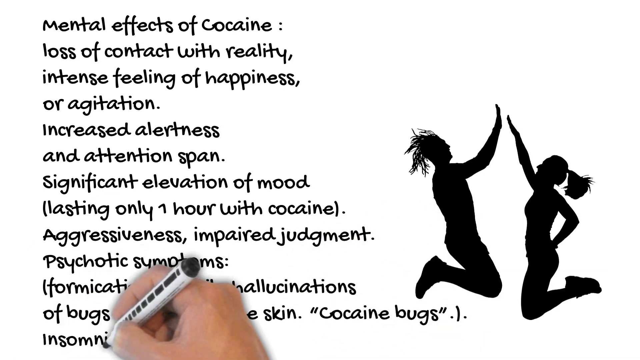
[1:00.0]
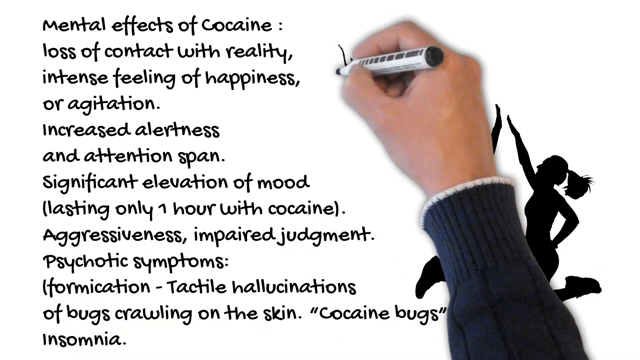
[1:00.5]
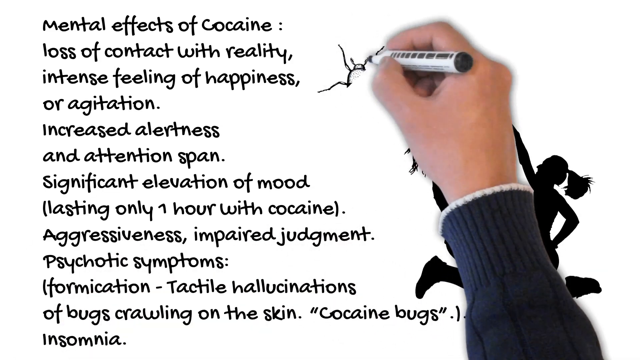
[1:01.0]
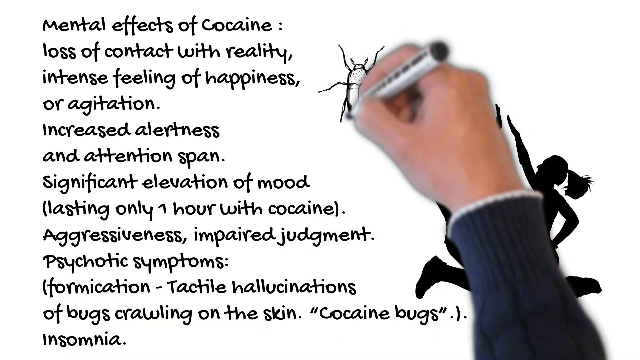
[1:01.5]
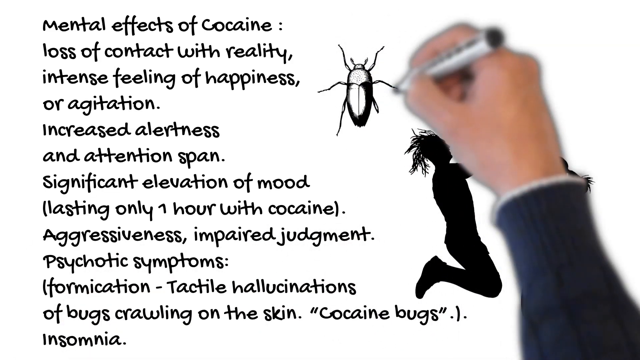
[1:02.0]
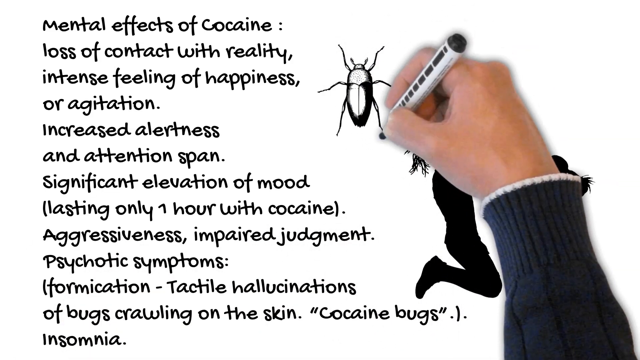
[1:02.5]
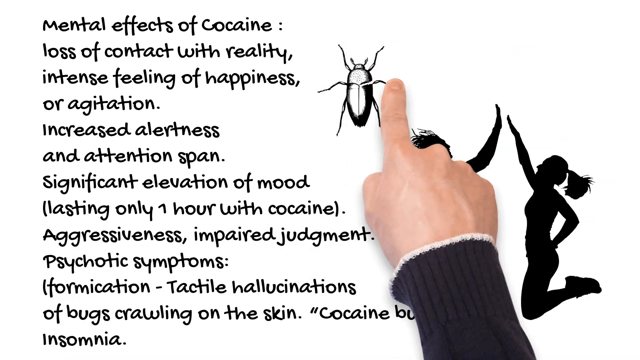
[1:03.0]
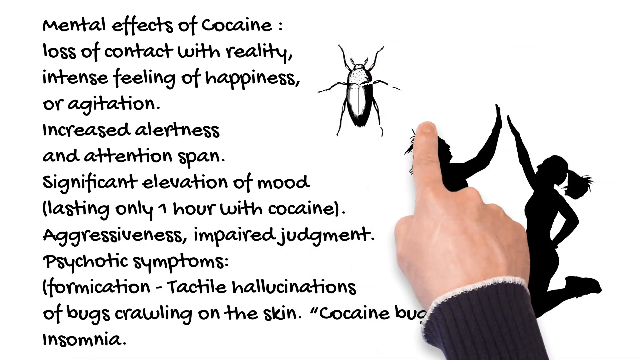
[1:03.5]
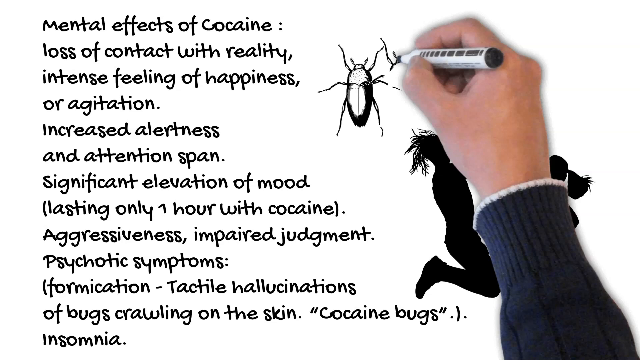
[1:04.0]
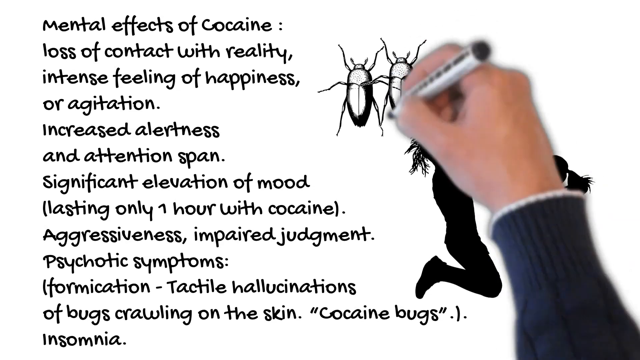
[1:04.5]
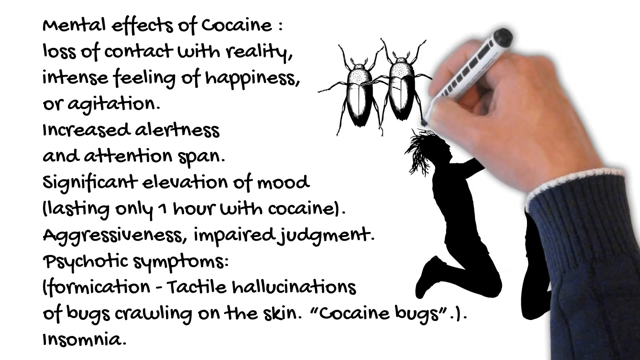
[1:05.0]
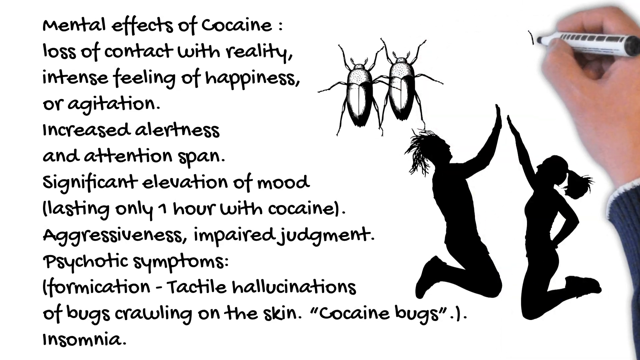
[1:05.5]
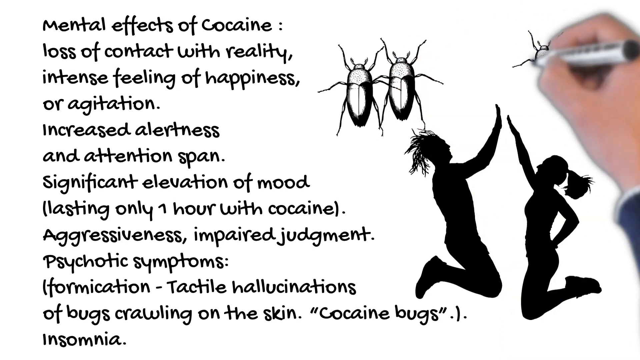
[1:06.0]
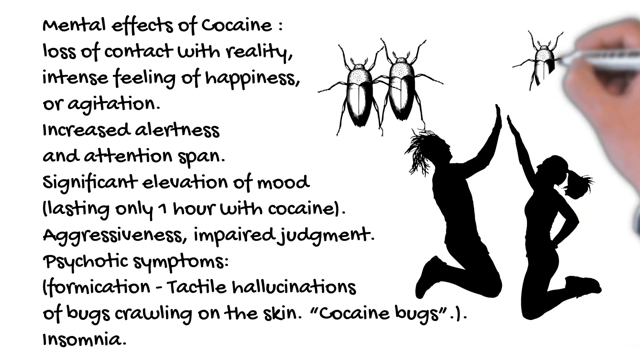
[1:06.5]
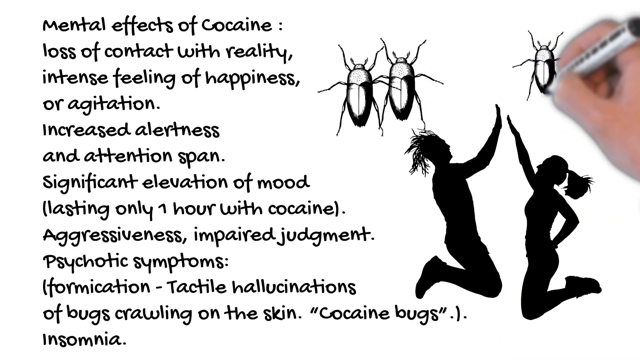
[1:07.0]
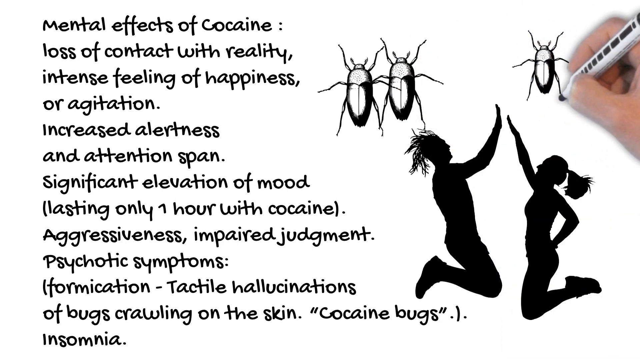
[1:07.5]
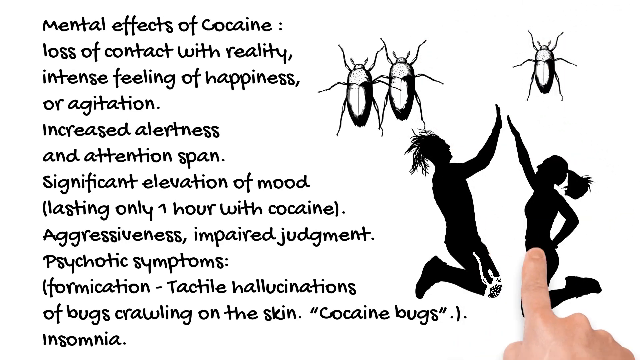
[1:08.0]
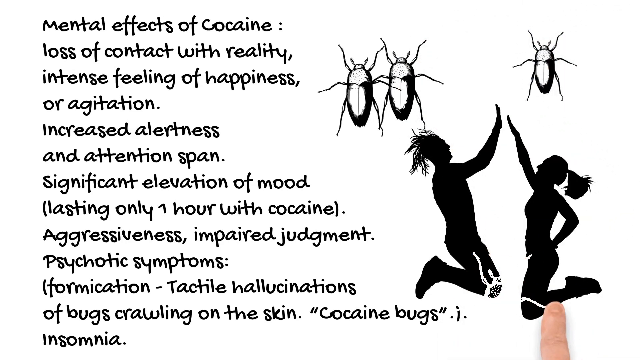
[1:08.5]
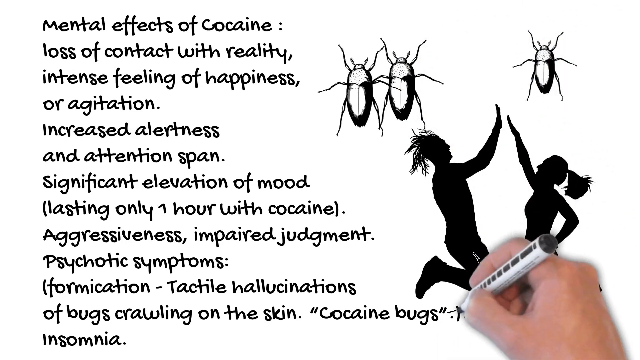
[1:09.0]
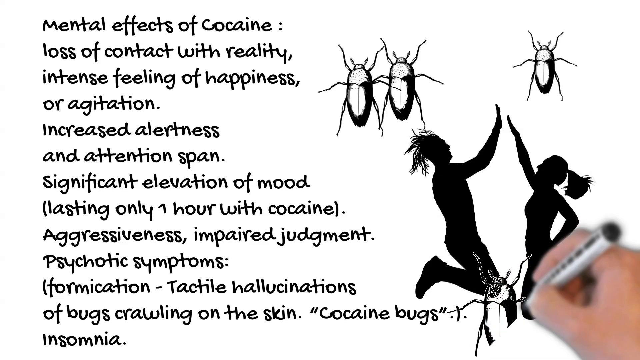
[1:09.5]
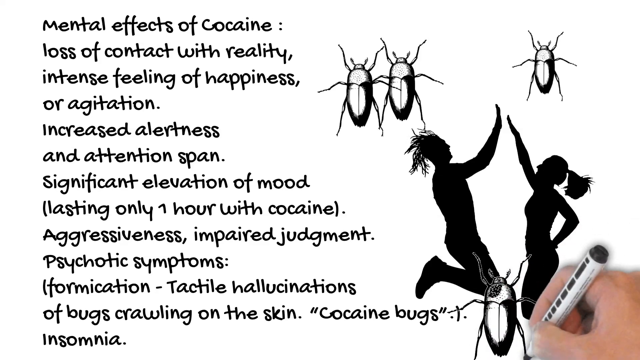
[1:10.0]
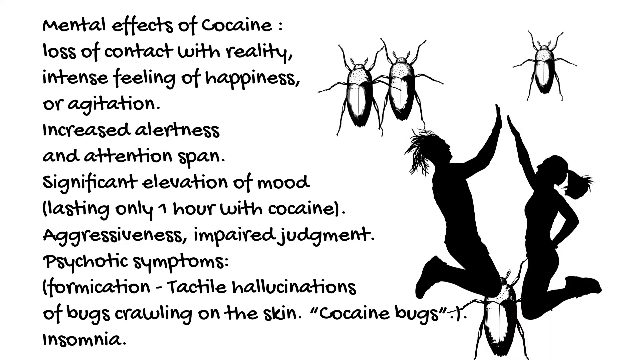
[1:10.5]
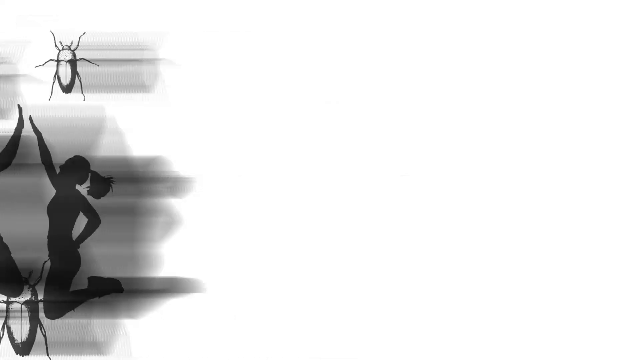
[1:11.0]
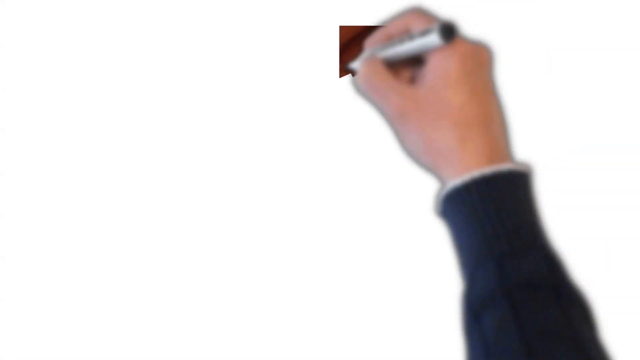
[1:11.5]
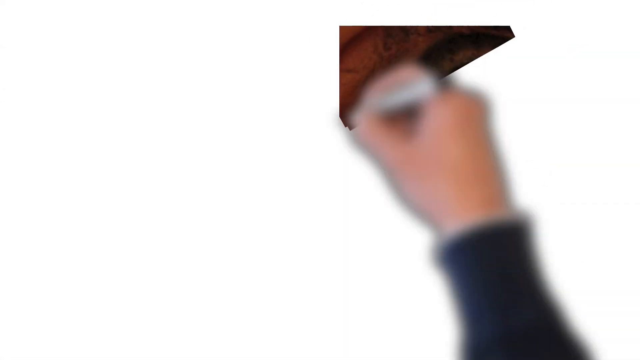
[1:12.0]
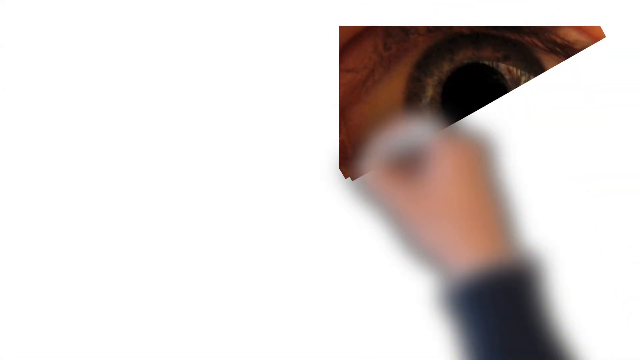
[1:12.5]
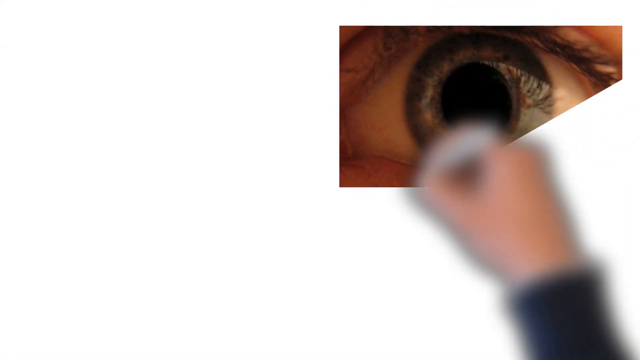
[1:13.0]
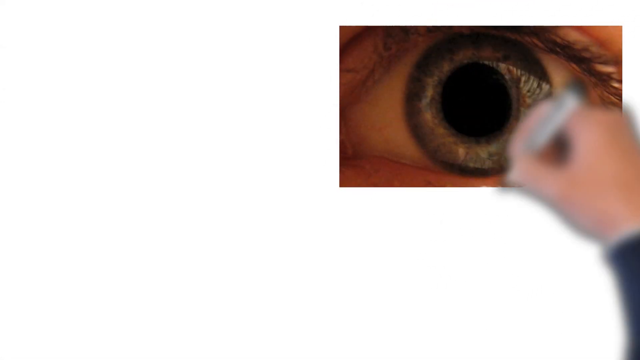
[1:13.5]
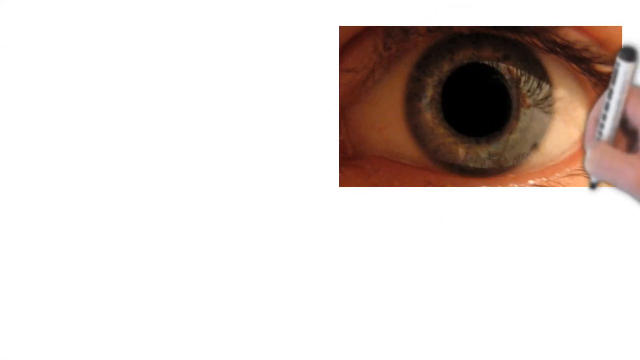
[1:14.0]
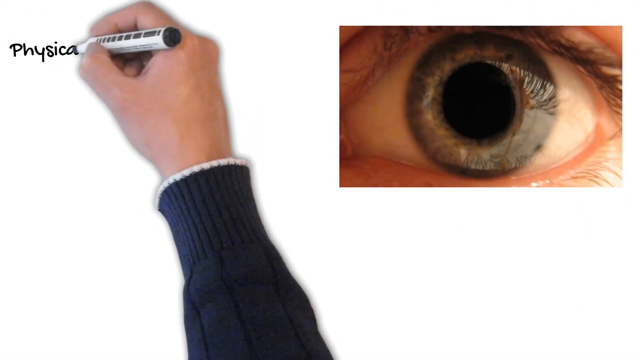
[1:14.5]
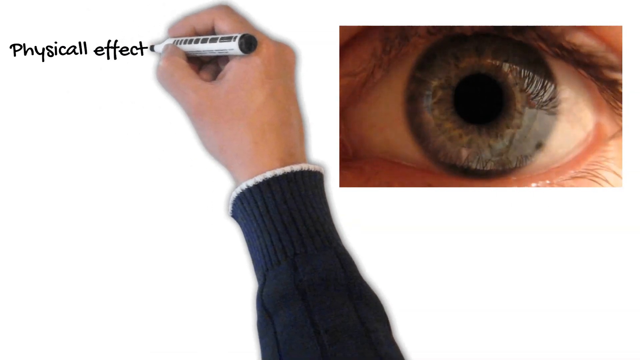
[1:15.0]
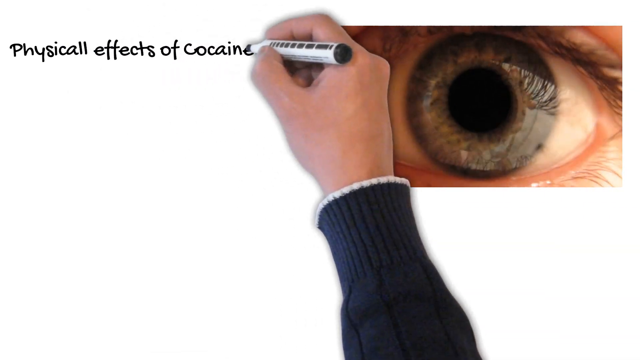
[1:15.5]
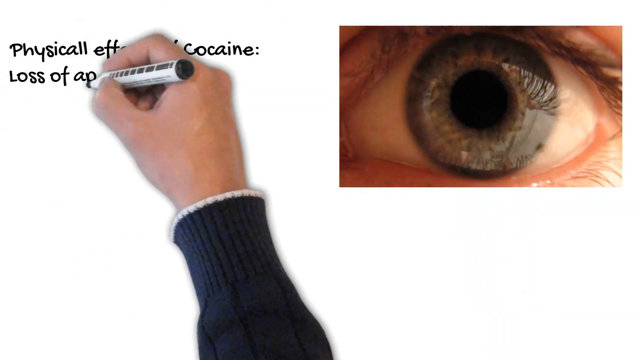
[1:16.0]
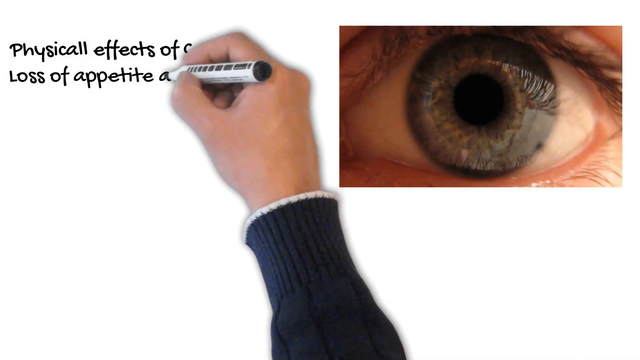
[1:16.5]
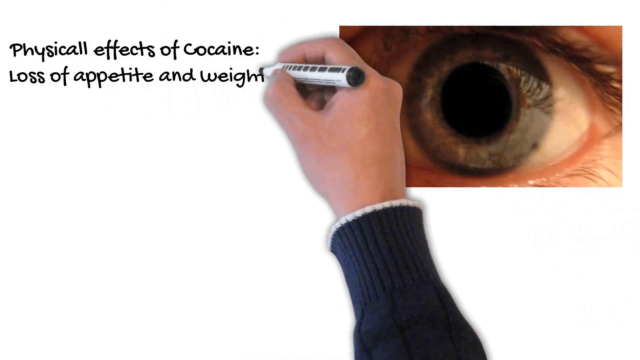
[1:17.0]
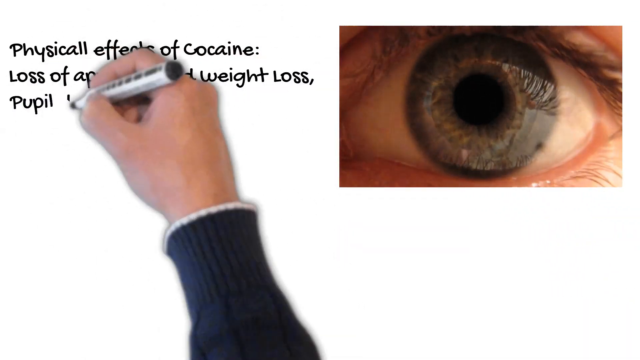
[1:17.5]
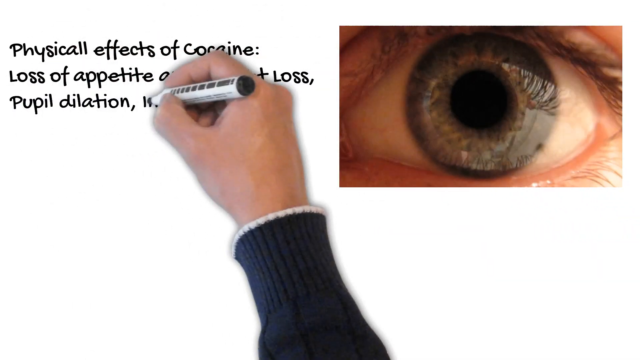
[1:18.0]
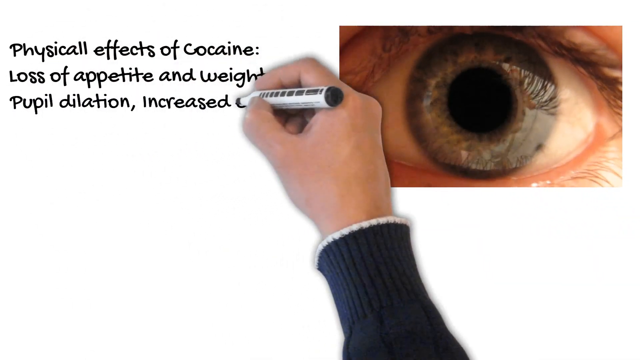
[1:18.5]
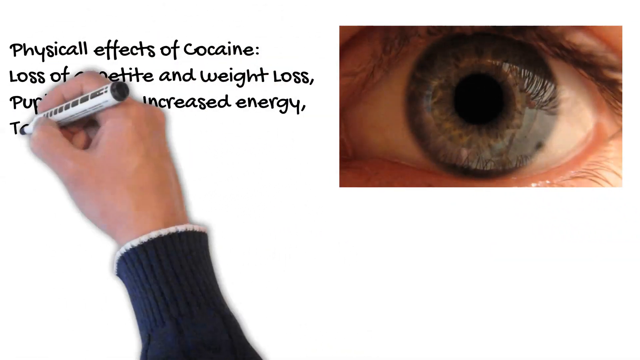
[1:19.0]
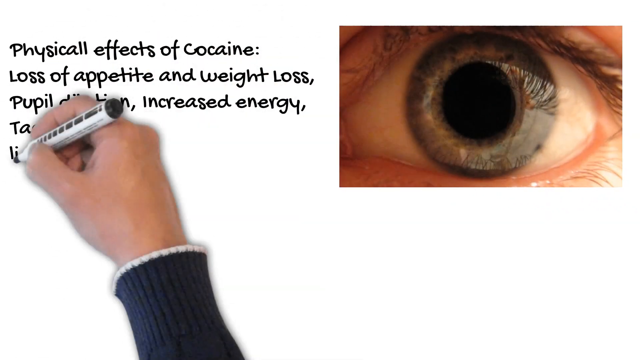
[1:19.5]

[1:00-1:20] An animated right arm with light skin draws on a whiteboard, holding a white marker with black ink. In the bottom right, two people jump and give each other a high five; they are black silhouettes with both their knees bent as they try to hit each other's hand in the air. On the left is a list of the mental effects of cocaine: "loss of contact with reality, intense feeling of happiness or agitation, increased alertness and attention span, significant elevation of mood, lasting only one hour with cocaine, aggressiveness, impaired judgment, psychotic symptoms =, formication, tactile hallucinations of bugs crawling on the skin, called cocaine bugs, insomnia." The hand then draws a bug in the middle of the screen that looks like a beetle, then a second, a third, and a fourth one down below. The whole scene shoots off to the left and a new screen appears, where the hand draws an eyeball on the right-hand side; it looks like a photorealistic eyeball whose pupils dilate in and out to near extremes. On the left, writing says "physical effects of cocaine, loss of appetite and weight loss, pupil dilation, increased energy."